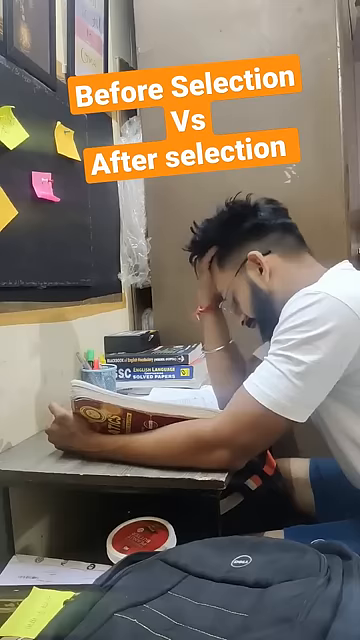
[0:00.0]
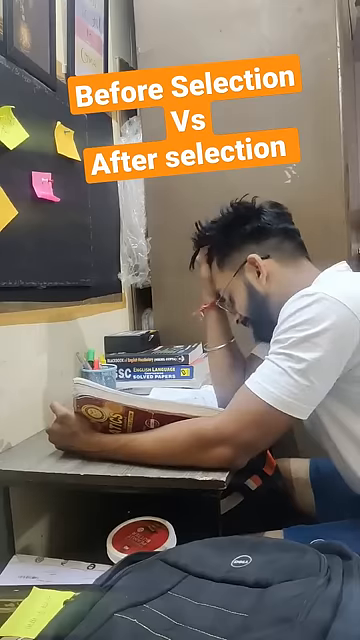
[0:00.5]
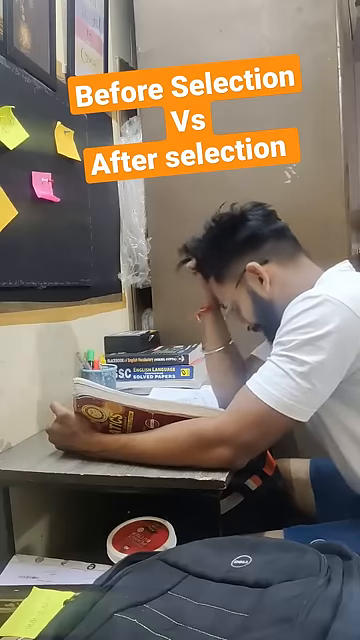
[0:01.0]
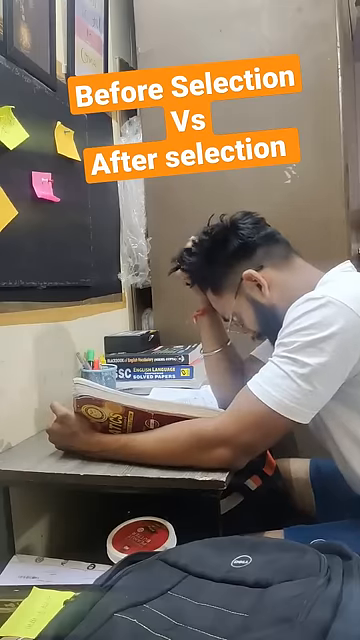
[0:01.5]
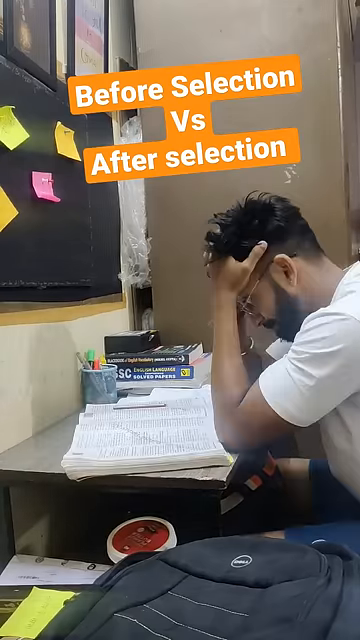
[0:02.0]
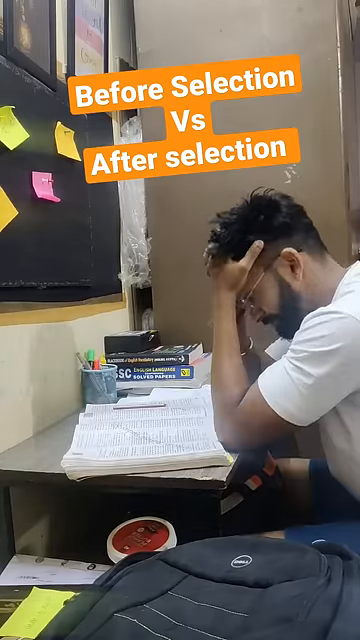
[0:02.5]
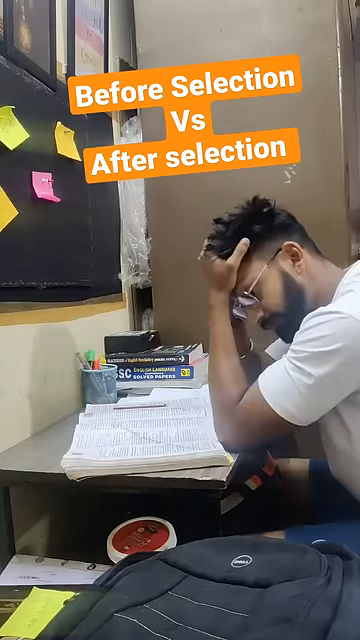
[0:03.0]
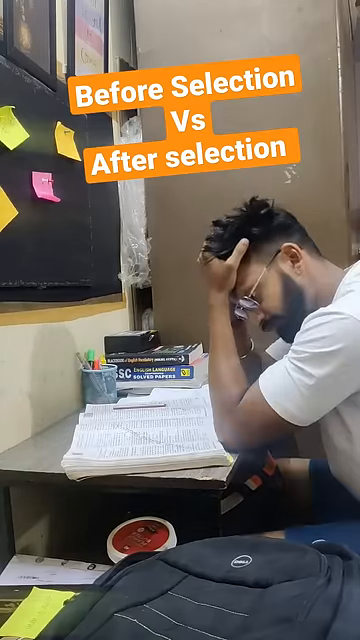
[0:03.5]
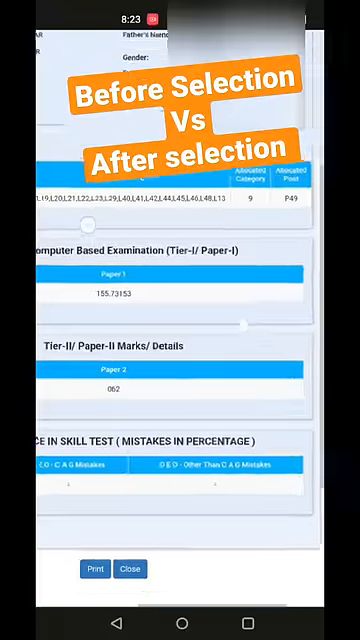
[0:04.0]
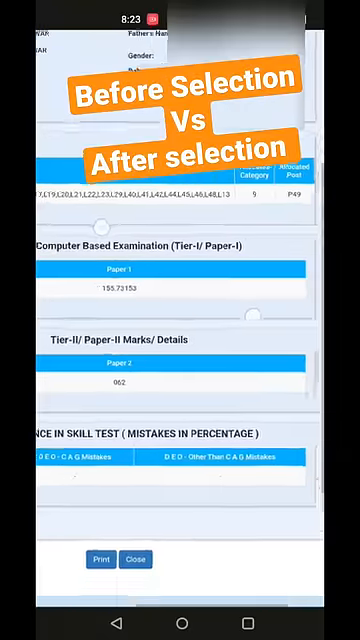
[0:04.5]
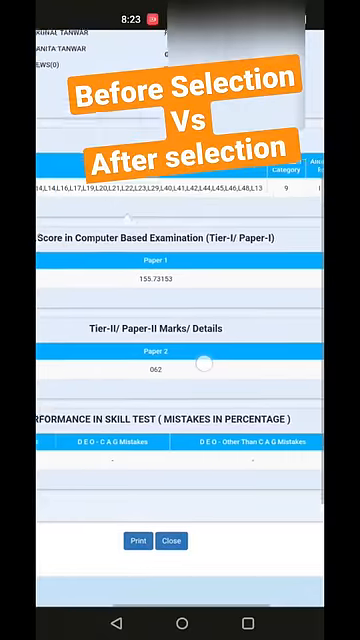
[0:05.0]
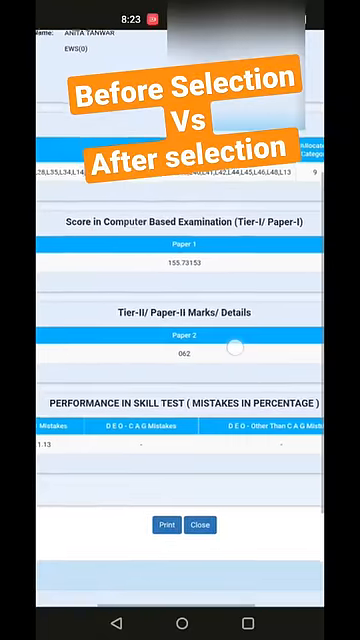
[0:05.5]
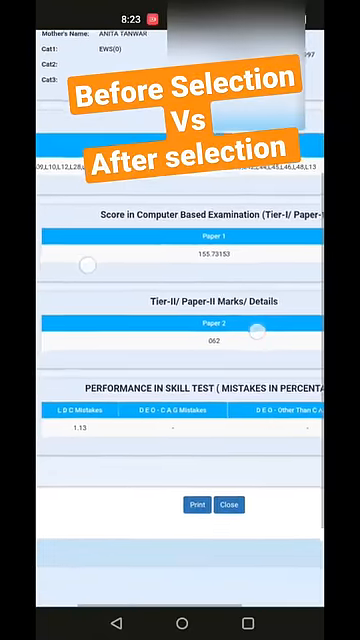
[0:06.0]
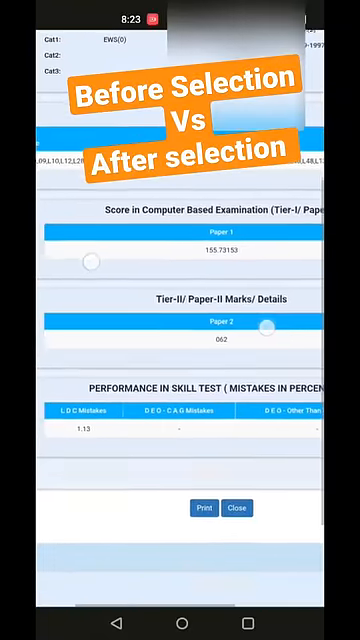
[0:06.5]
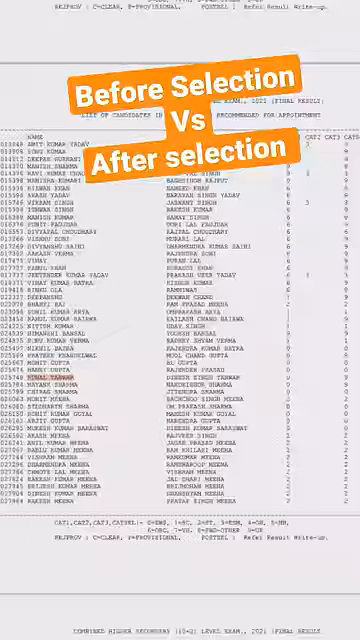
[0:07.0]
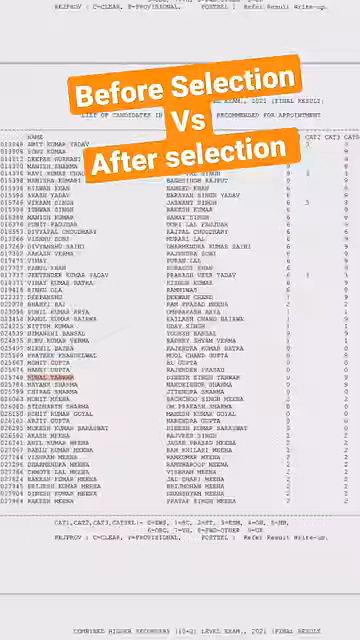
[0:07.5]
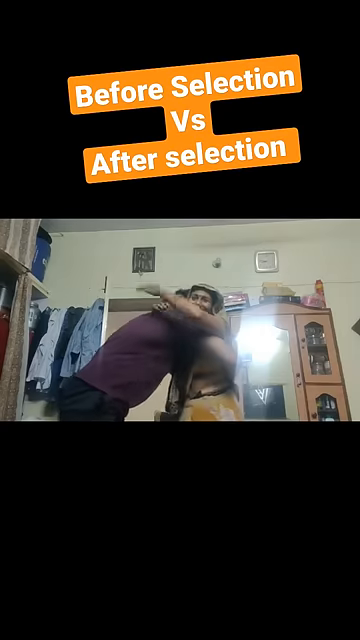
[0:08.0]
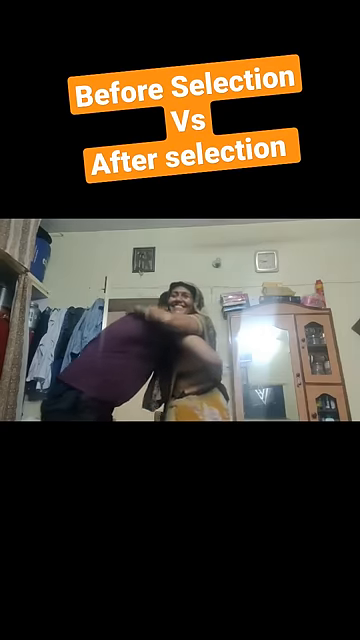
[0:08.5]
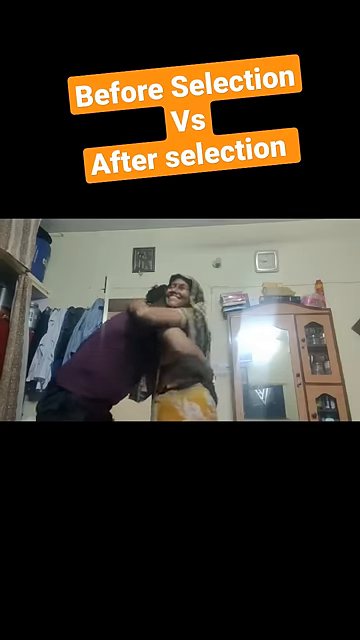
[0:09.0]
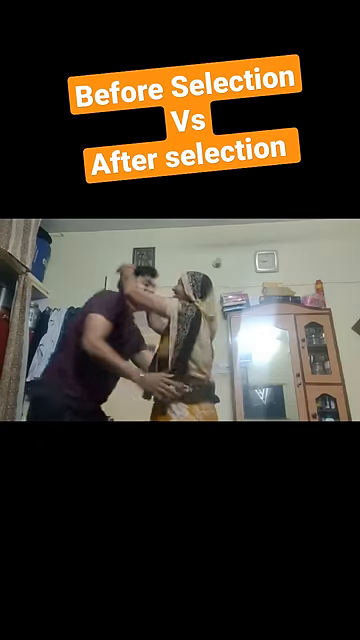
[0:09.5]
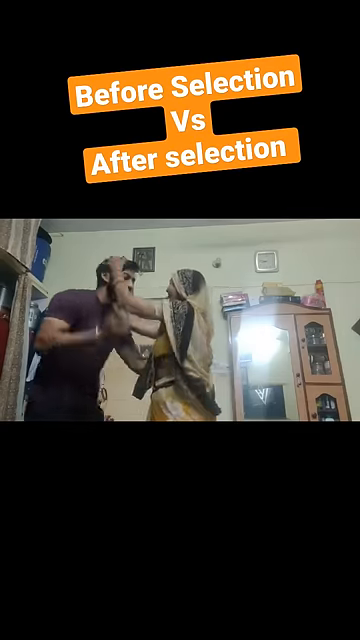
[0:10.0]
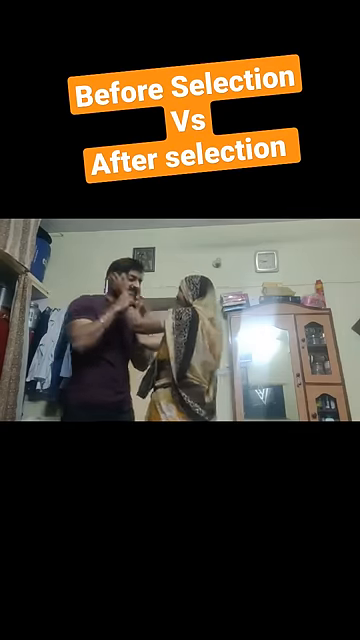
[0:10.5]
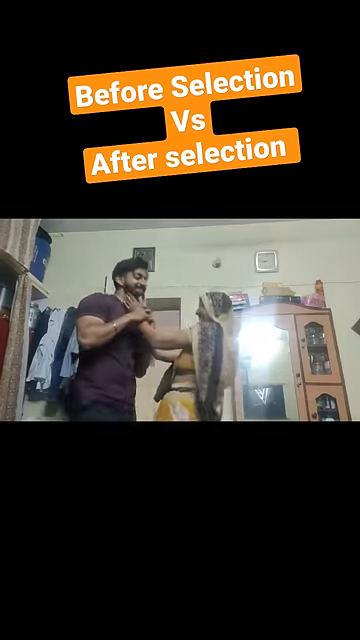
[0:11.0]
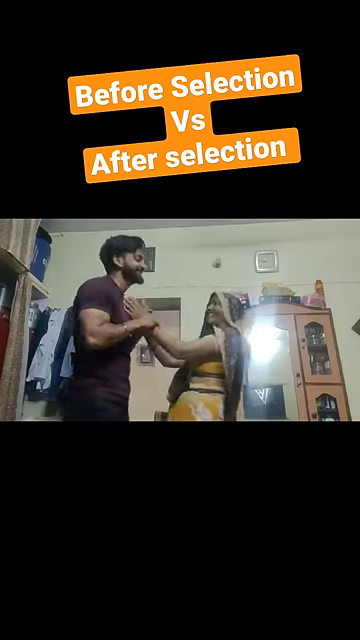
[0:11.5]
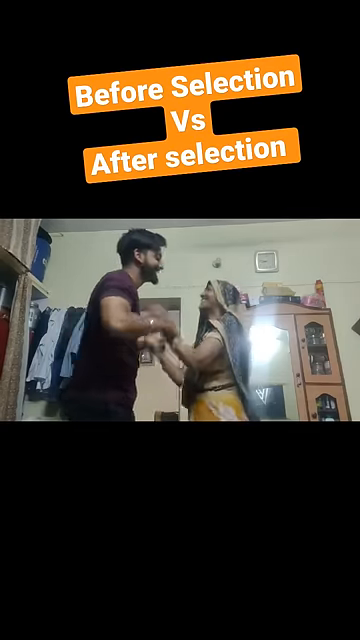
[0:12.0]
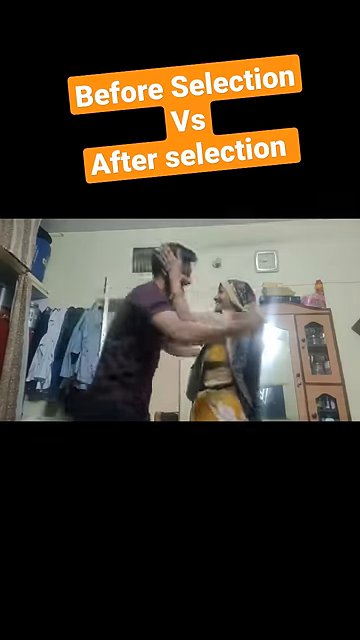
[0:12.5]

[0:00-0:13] A man sits at a desk looking through a book. He has dark hair and glasses, and at the start he looks stressed out, running his hands through his hair and looking at the book as if it is overwhelming to him. On the wall there is some kind of board with sticky notes on it. Quick shots follow of what looks like a list of names, with words that cannot be made out, and of what looks like a computer screen with writing on it that reads "before selection versus after selection" in white letters on an orange background. The screen seems to offer choices, and the man appears to be picking something out from a list of things. The video then switches quickly to him hugging a woman in a room. They look to be Indian; she appears to be in Indian garb, with a head veil wrapped around her. There is some kind of dresser in the background of the room. He seems very happy, and she is very happy. The whole video is very quick.